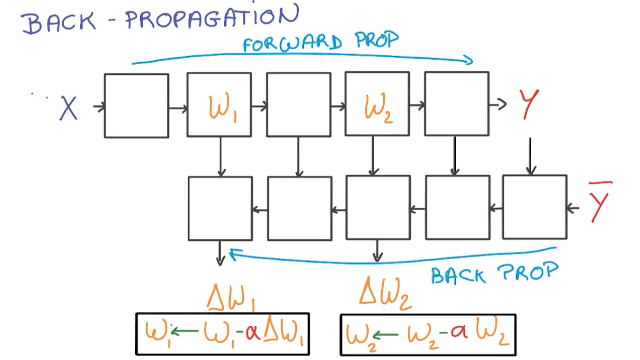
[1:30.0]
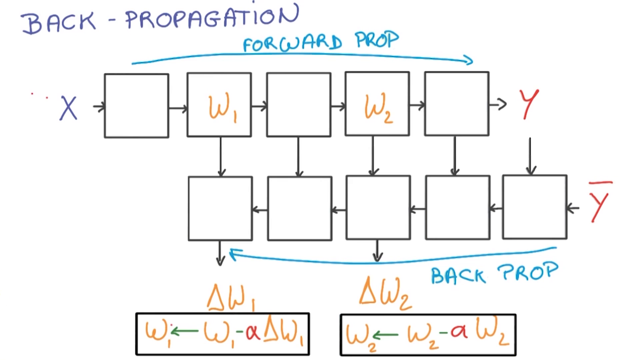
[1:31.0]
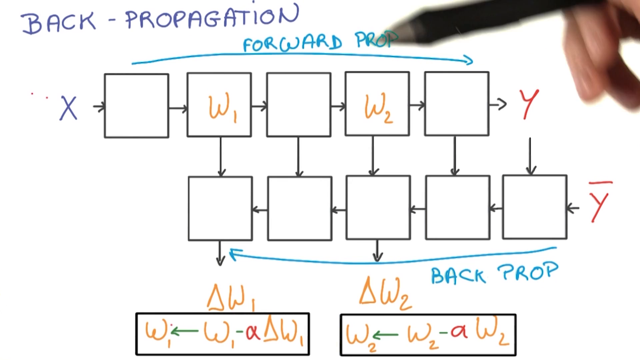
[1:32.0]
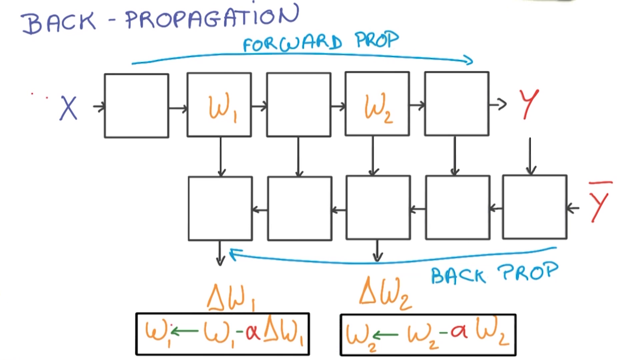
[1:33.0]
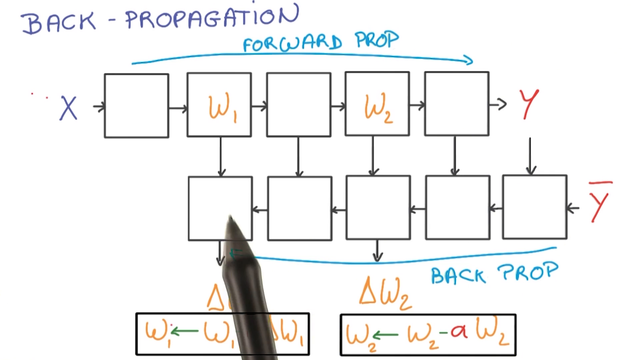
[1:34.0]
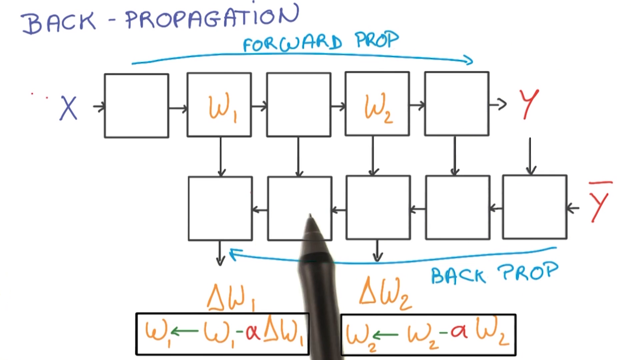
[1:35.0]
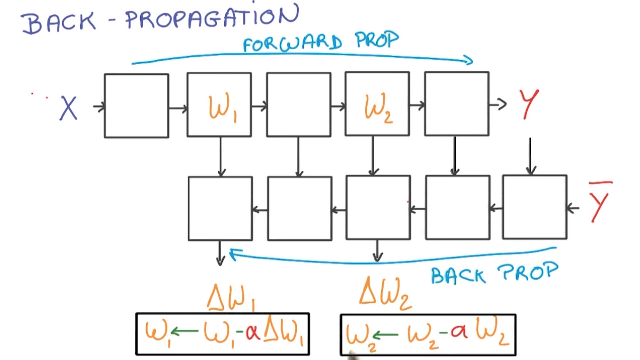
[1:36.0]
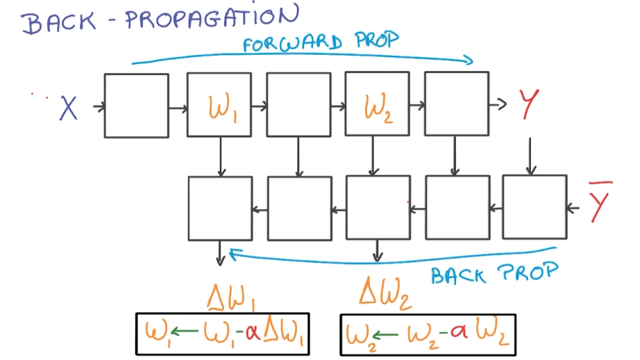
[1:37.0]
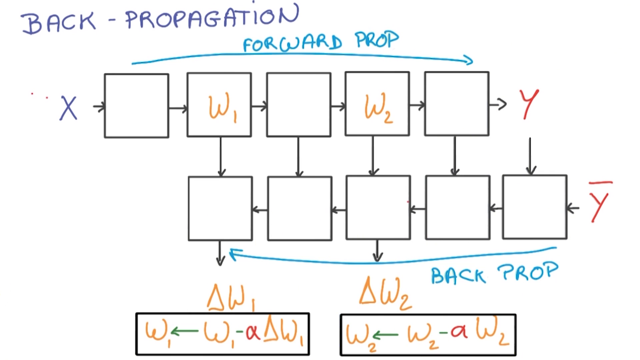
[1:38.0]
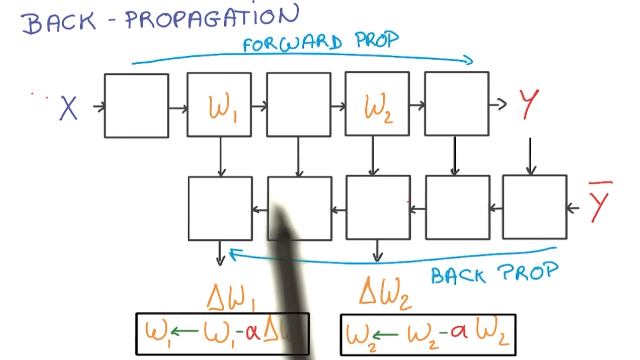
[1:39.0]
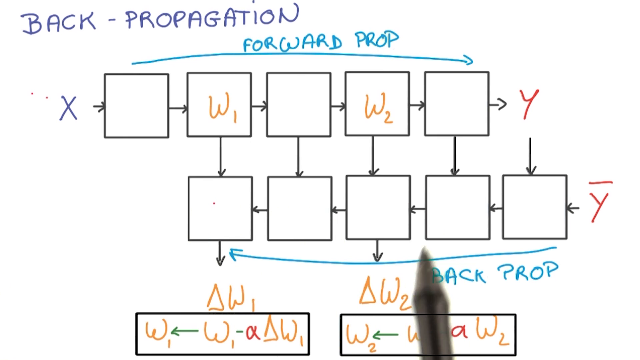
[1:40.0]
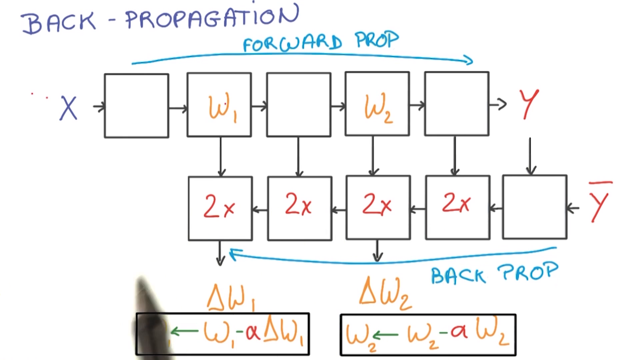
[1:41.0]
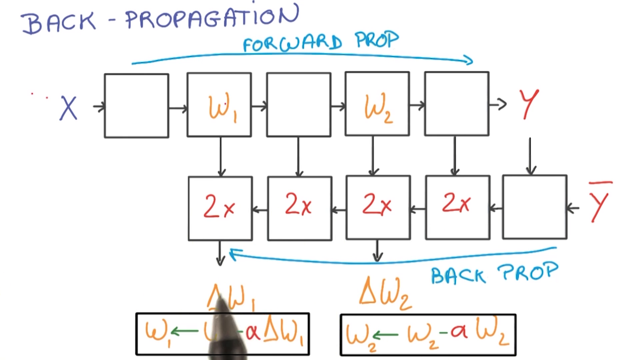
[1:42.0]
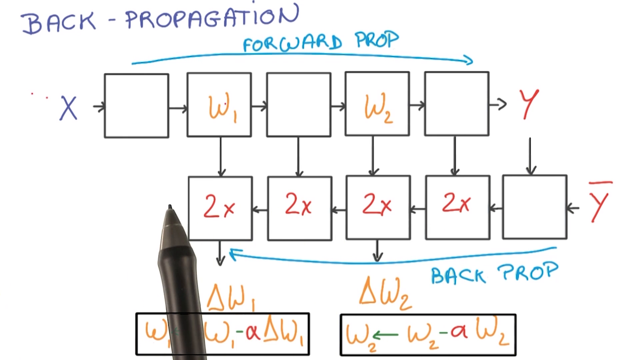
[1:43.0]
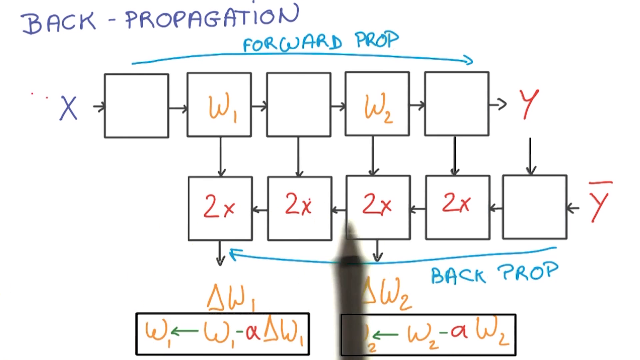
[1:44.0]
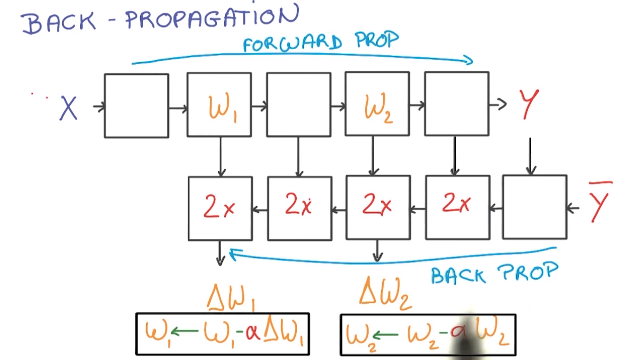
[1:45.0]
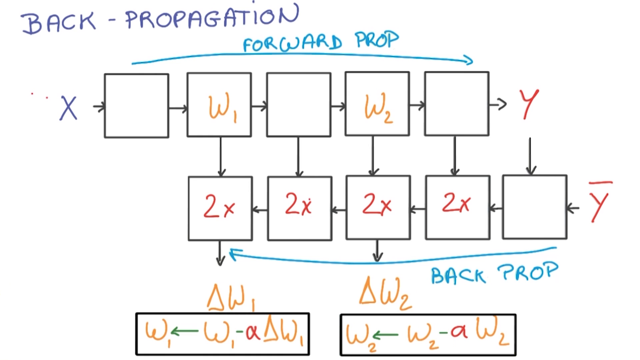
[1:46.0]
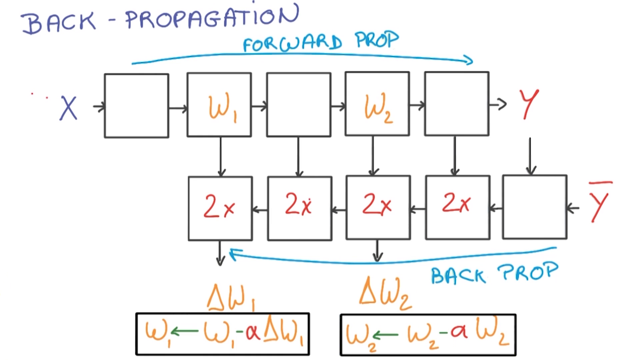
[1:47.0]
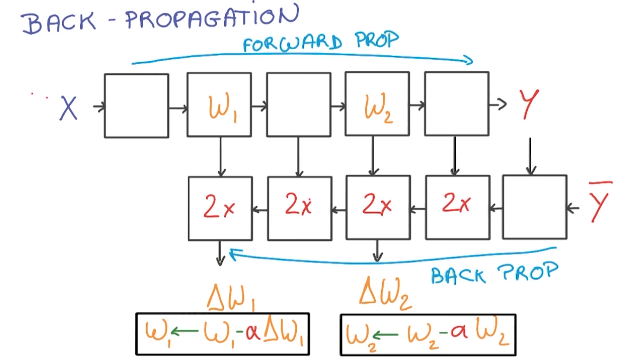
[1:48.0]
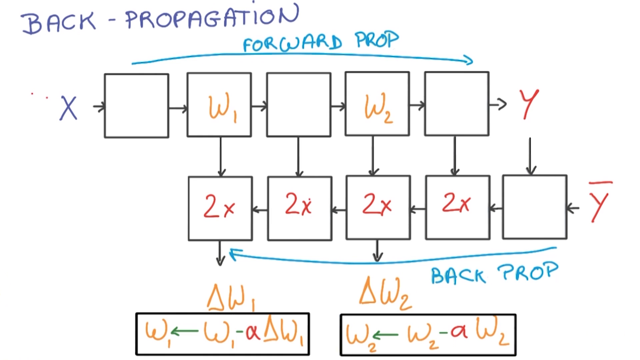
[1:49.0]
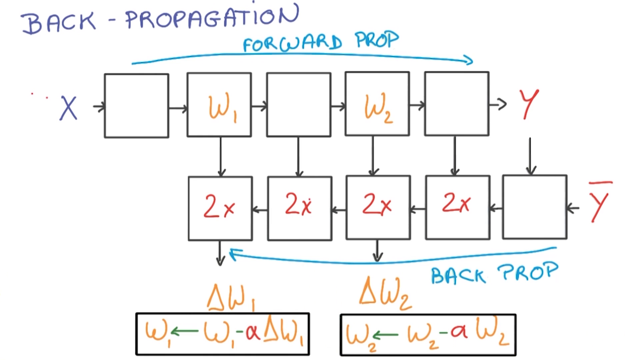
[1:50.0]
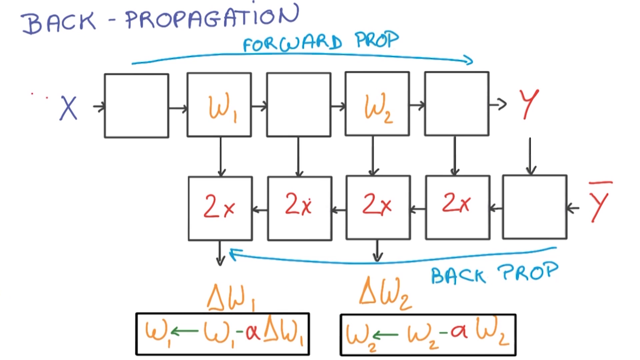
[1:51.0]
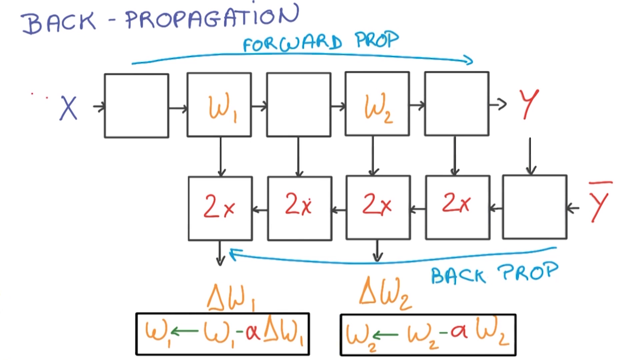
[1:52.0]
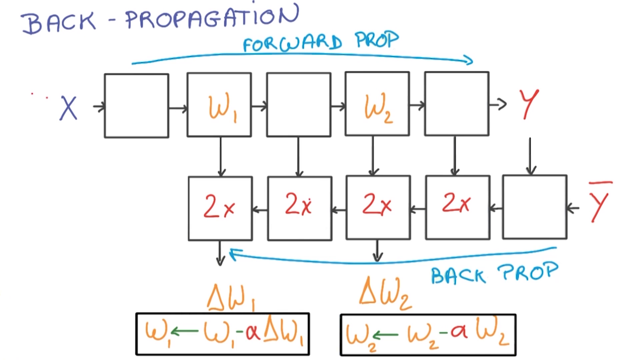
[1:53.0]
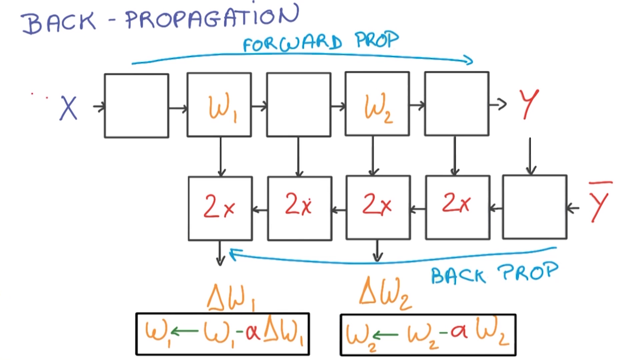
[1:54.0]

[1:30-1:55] The person behind the camera points out the squares that lead to each formula, circling around them. Then the backprop part on the lower squares is shown: the person fills 4 of the 5 squares with a red 2x, which might mean multiplication or an unknown value. Some squares are still left empty, without the W's or the 2x.